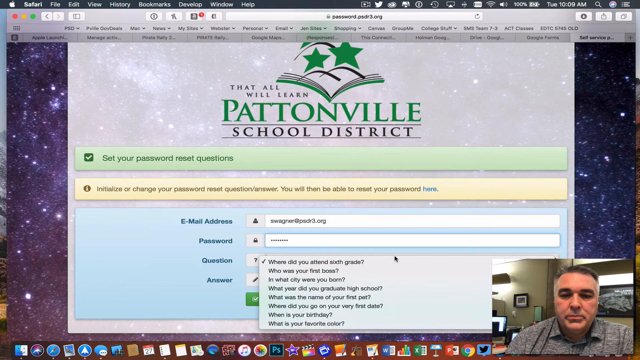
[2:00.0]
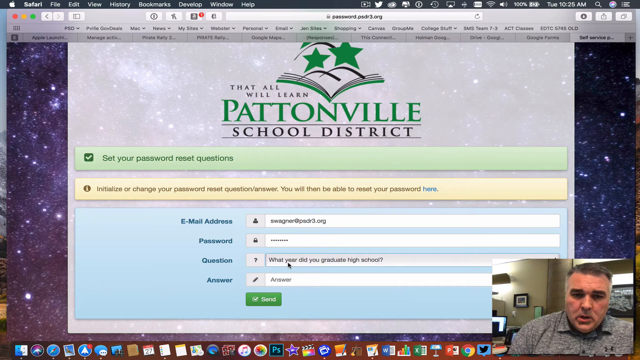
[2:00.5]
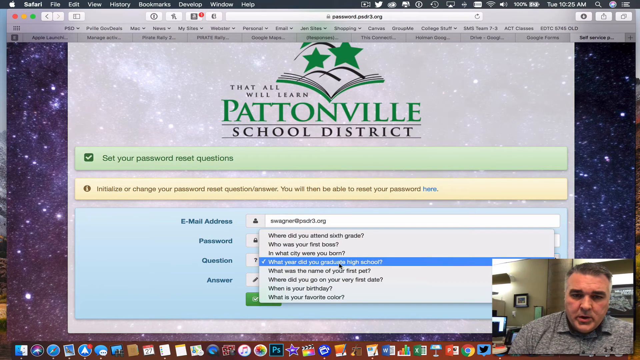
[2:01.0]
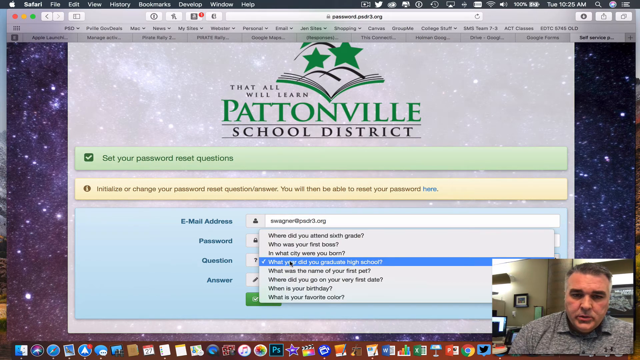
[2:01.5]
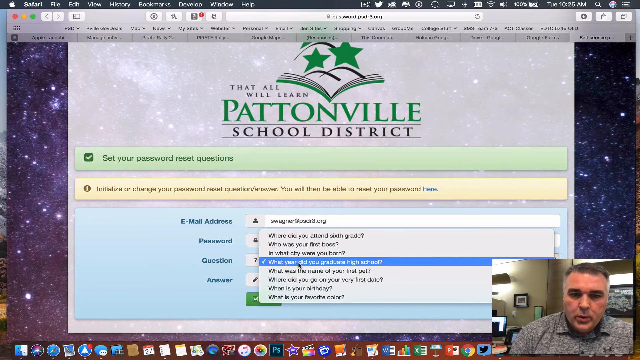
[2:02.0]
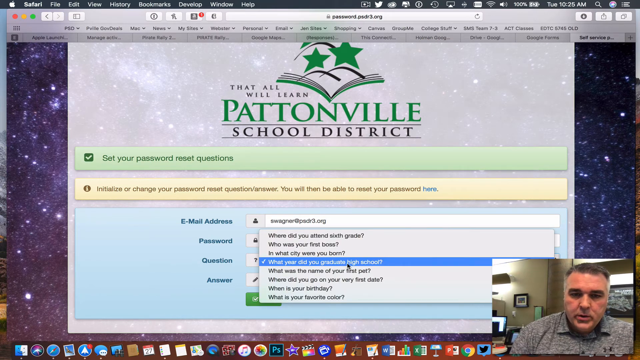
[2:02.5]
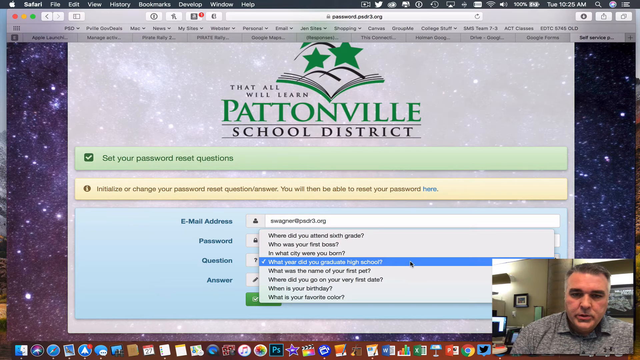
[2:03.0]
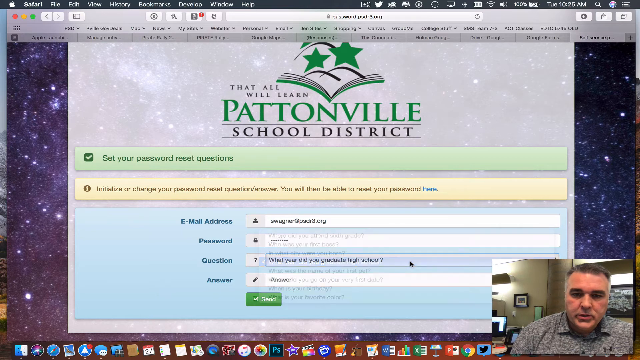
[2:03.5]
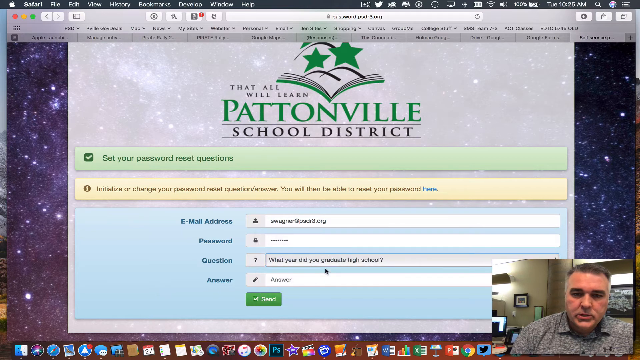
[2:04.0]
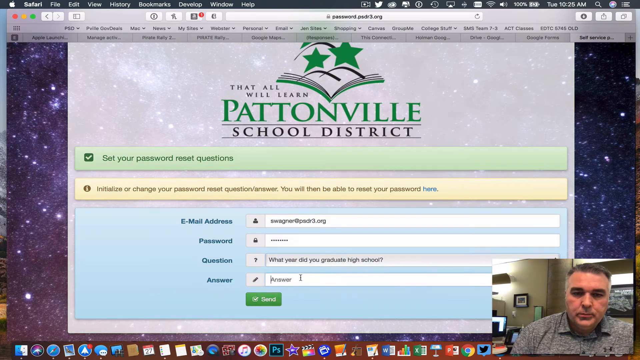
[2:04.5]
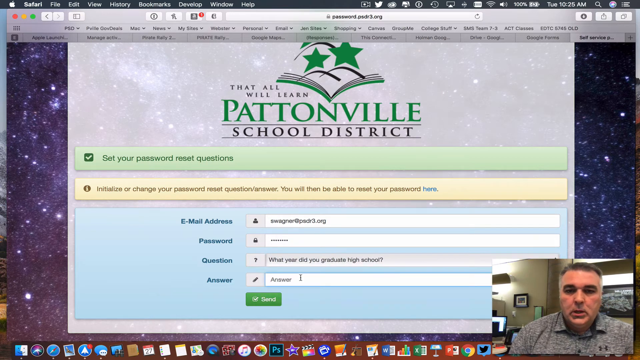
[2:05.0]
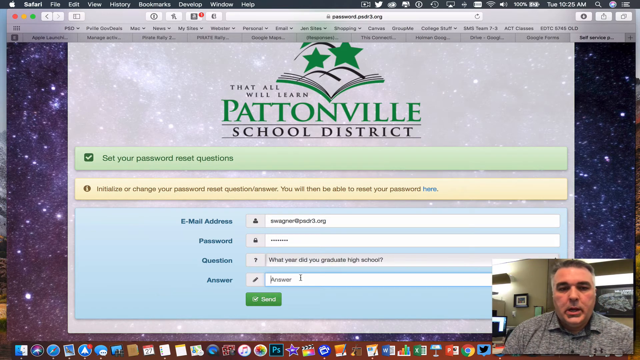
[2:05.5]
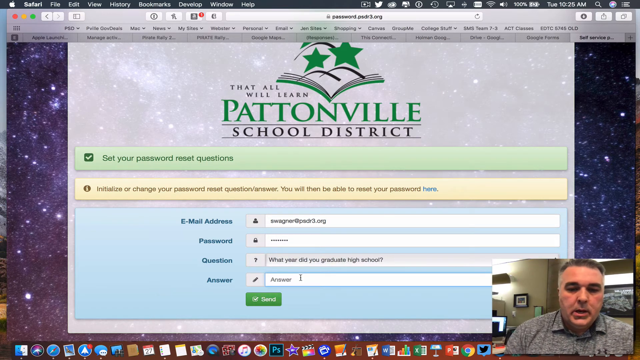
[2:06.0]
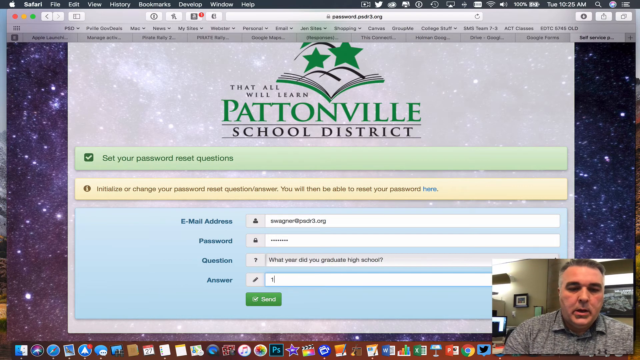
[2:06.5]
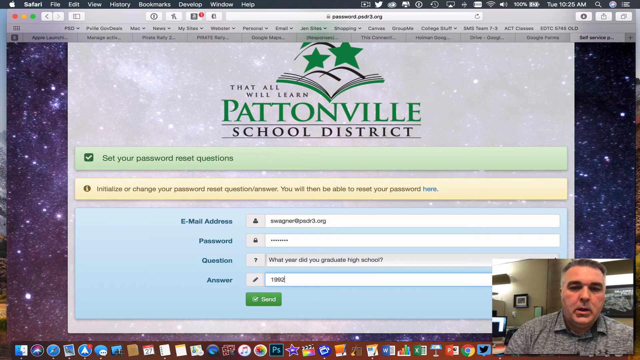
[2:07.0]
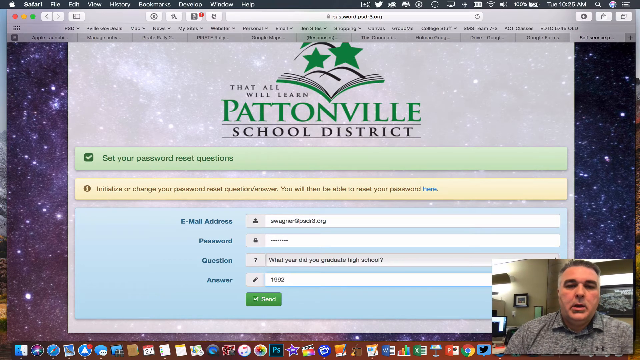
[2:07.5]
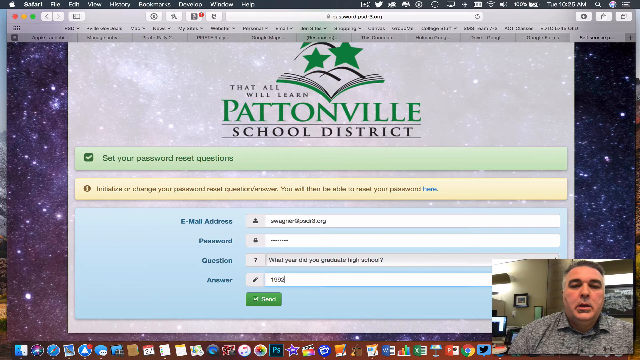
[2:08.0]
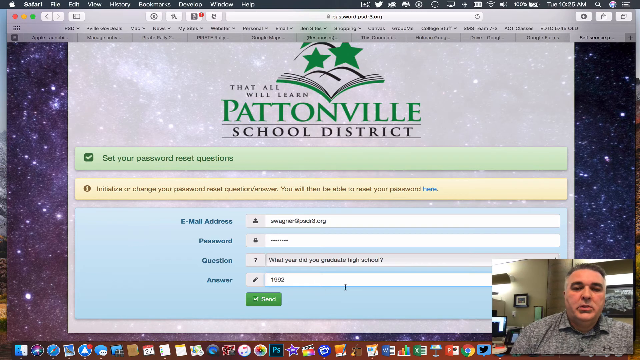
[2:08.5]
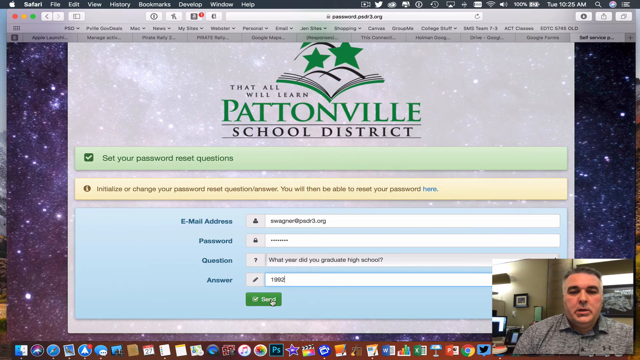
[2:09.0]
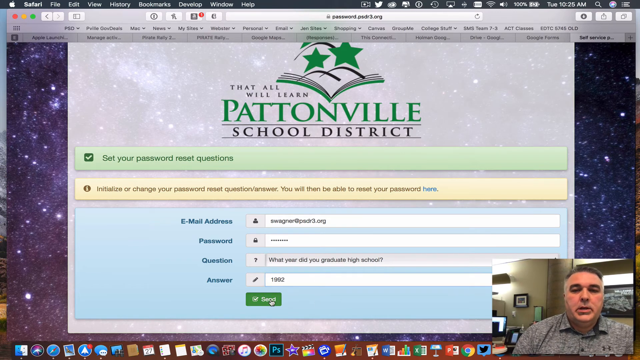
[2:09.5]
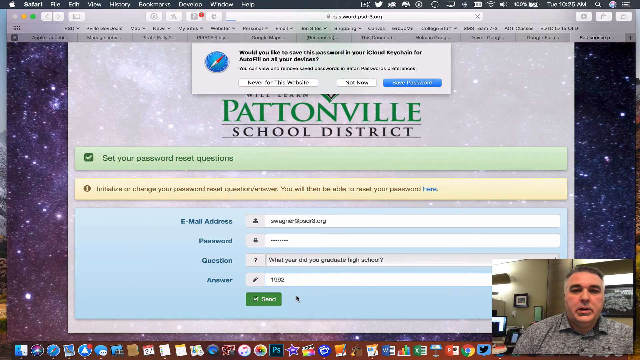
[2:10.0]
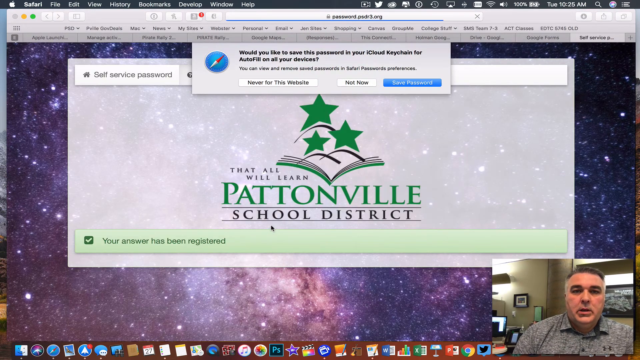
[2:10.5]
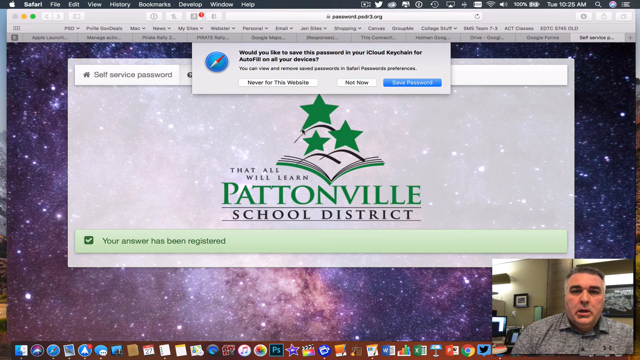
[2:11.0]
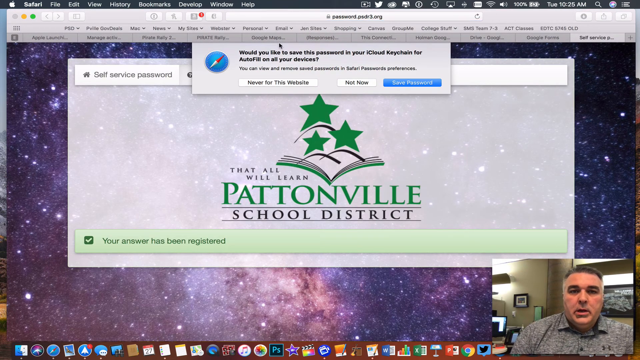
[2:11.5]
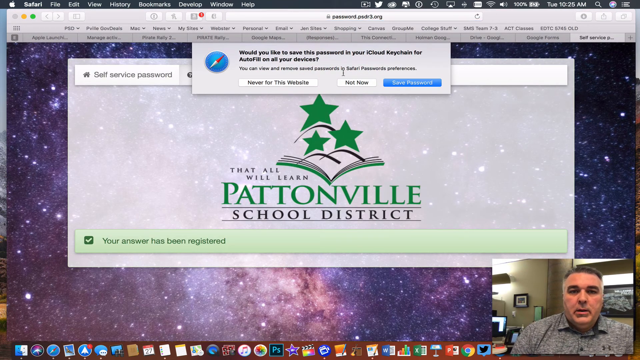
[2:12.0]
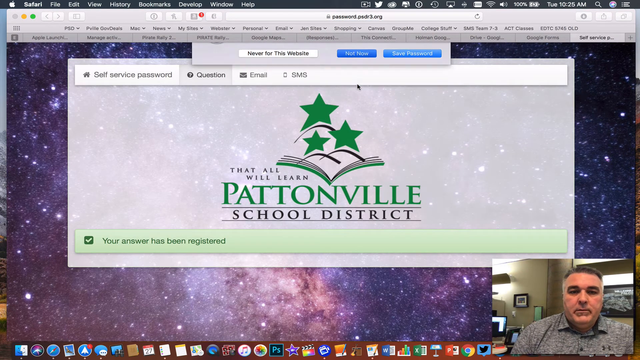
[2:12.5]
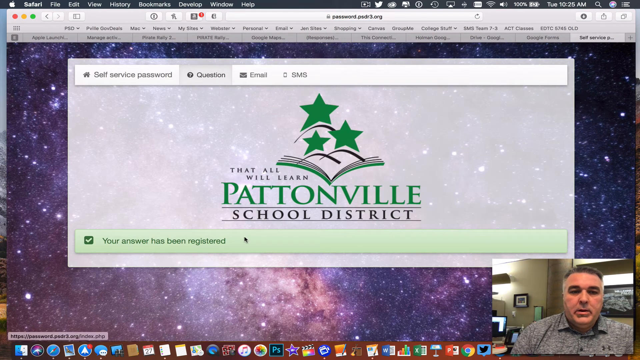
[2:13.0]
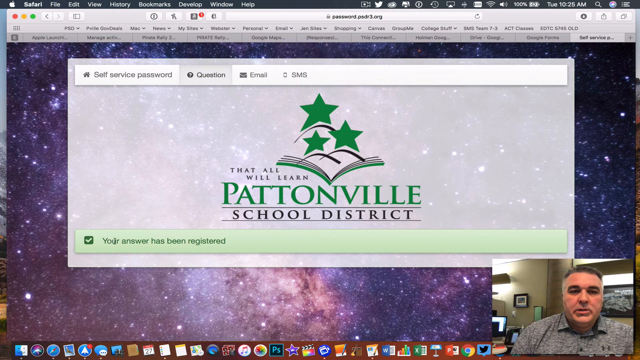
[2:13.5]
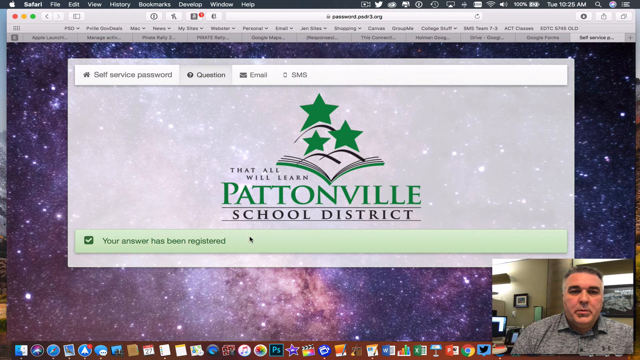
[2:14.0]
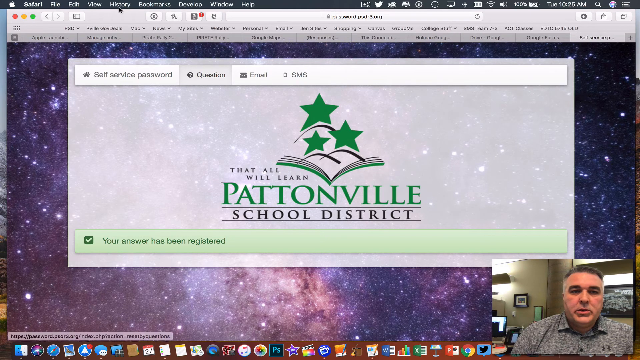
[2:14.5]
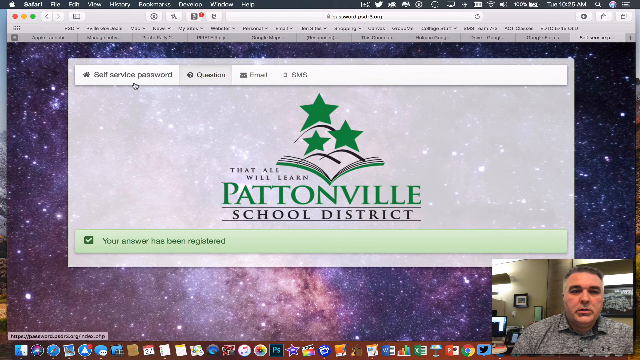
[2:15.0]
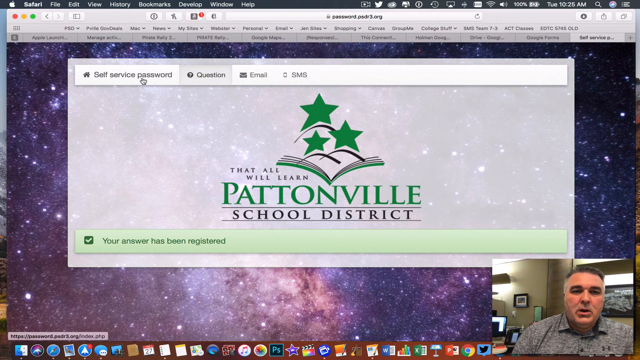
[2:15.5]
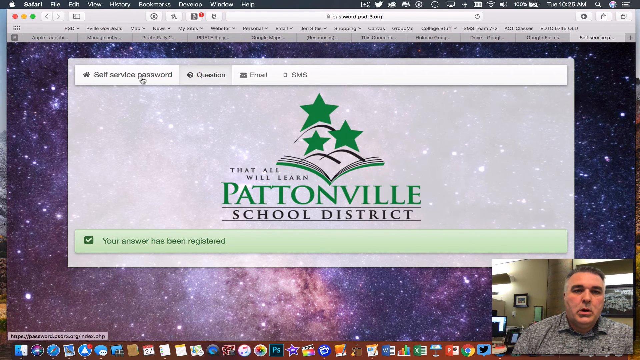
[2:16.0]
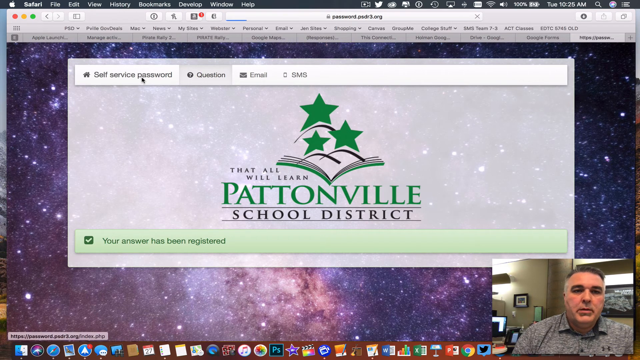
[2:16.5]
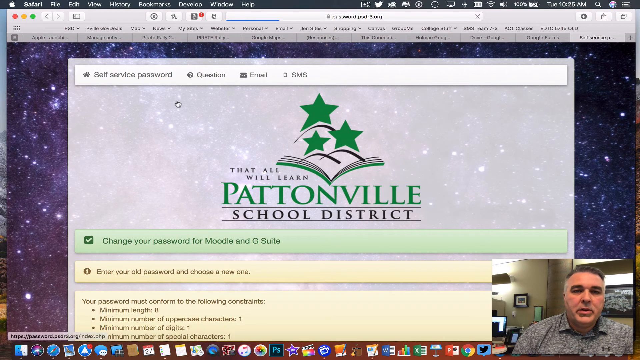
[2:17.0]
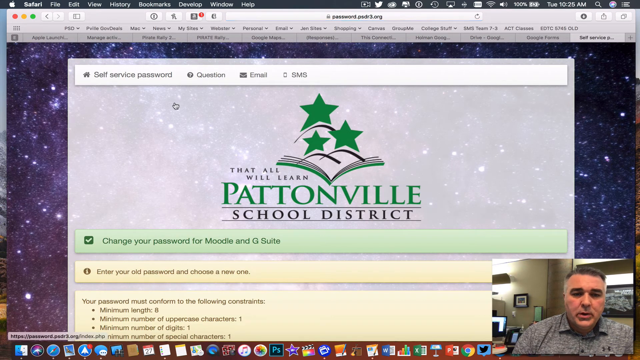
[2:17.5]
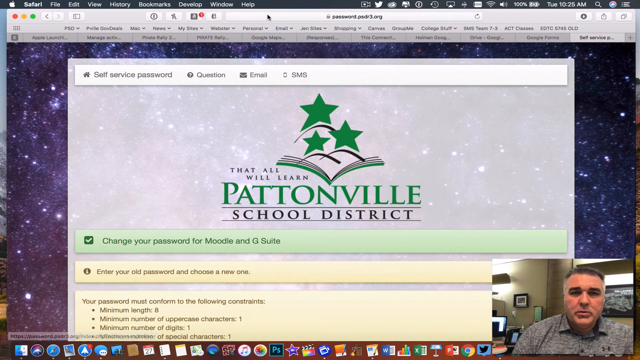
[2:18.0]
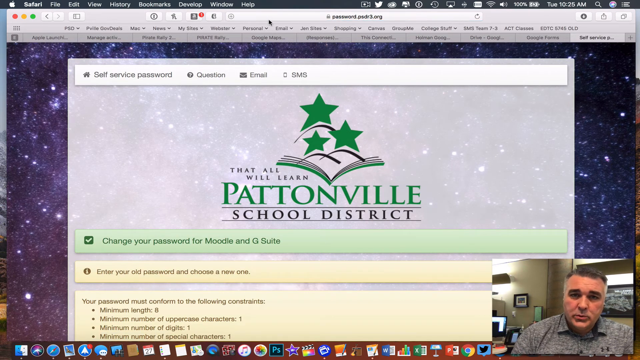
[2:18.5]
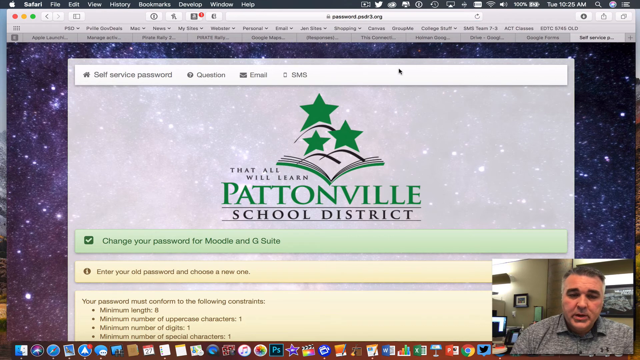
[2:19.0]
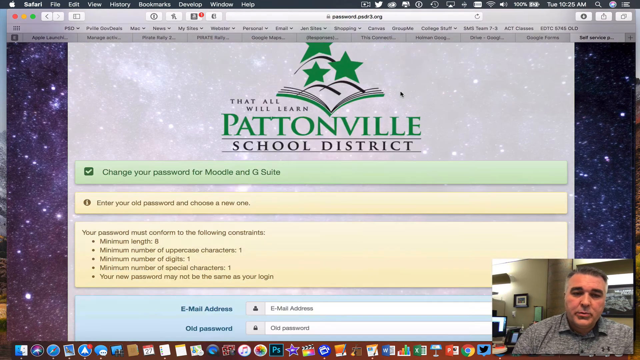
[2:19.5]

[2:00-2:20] The man is still in the lower right-hand corner. He opens the question drop-down list, which is blurry; the questions appear to include "where did you attend 6th grade?", "who was your first boss?", "in what city were you born?", "what year did you graduate high school?", "what was the name of your first pet?", "where did you go on your first day?", "when is your birthday?" and "what is your favorite color?" He picks the high school graduation question, and the answer looks like it may be 1992. A Safari pop-up then appears asking "would you like to save this password in your" keychain "for autofill on all your devices," with the options "never for this website," "not now," and a third button that is only partly visible and probably says save password. He clicks "not now," then puts the mouse over the text "self-service password."